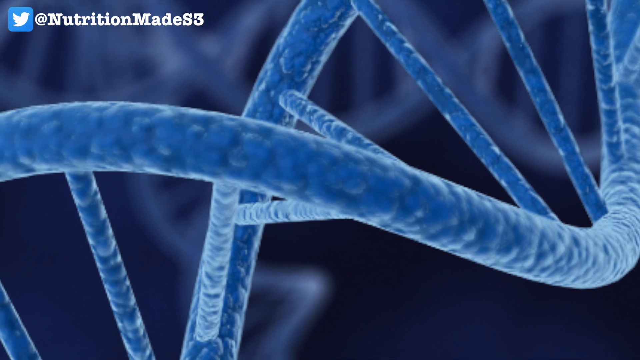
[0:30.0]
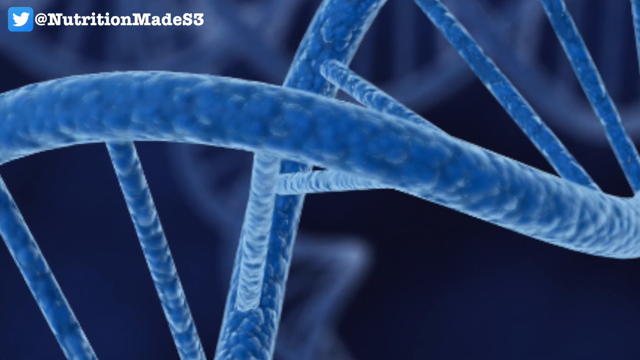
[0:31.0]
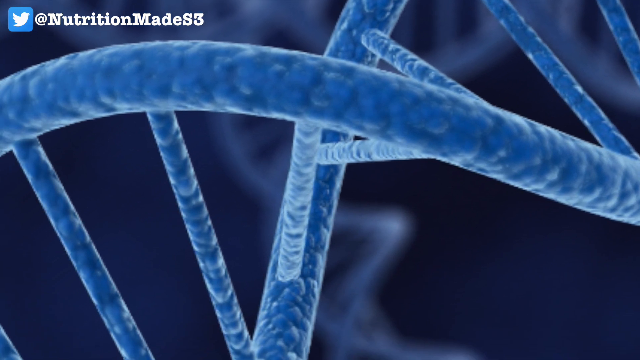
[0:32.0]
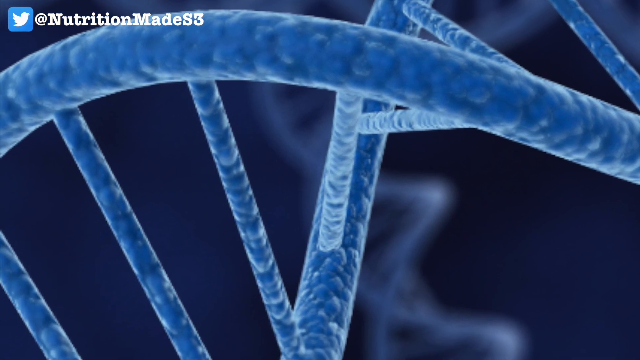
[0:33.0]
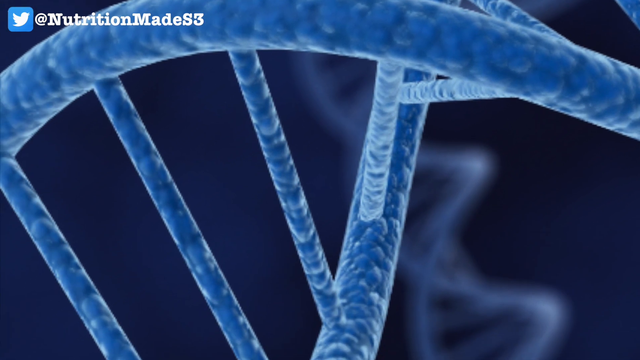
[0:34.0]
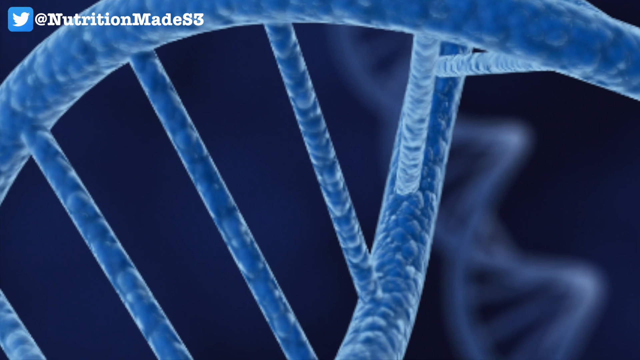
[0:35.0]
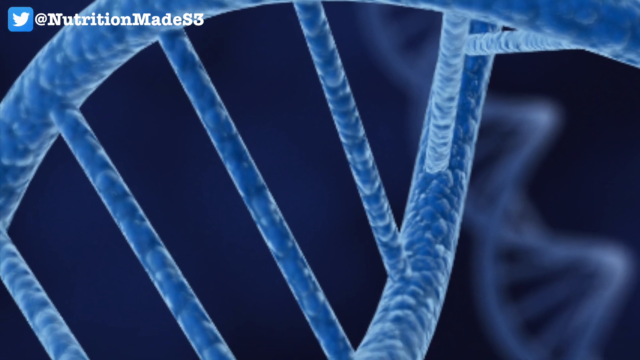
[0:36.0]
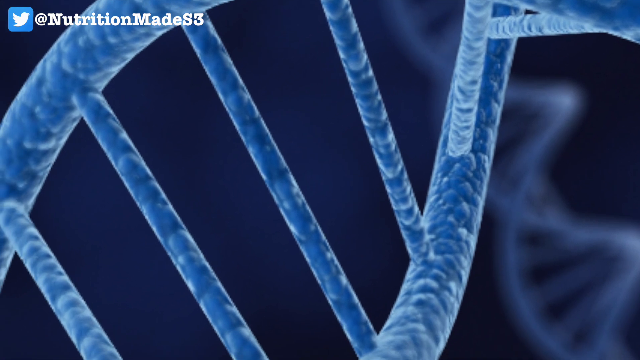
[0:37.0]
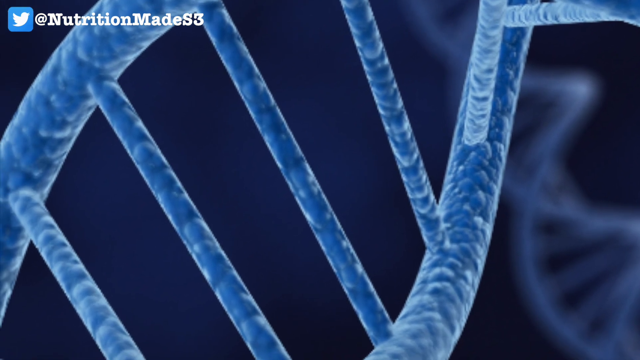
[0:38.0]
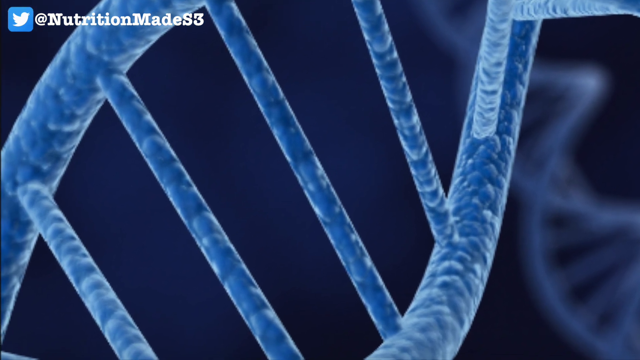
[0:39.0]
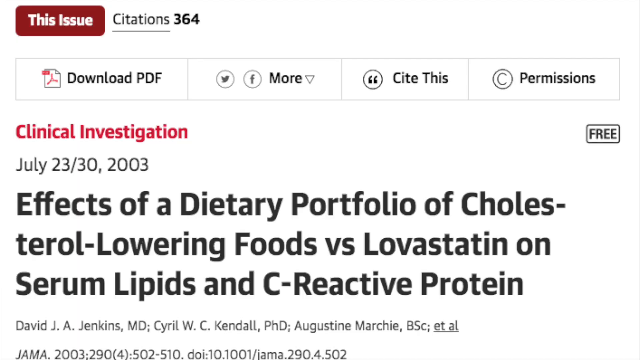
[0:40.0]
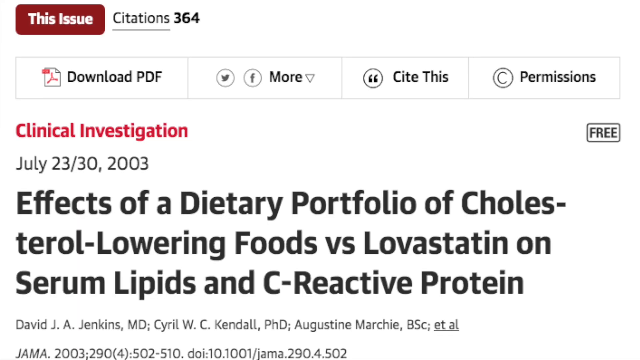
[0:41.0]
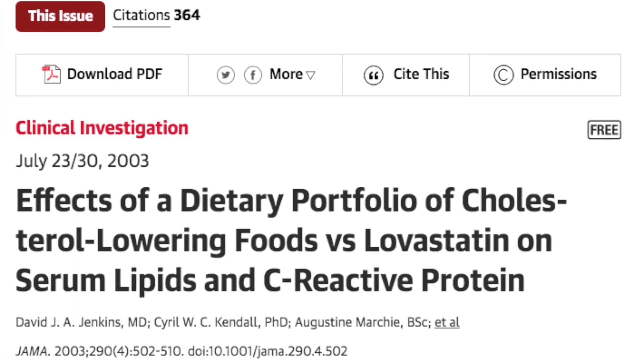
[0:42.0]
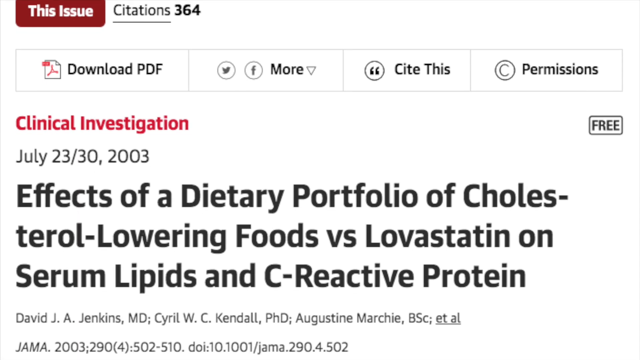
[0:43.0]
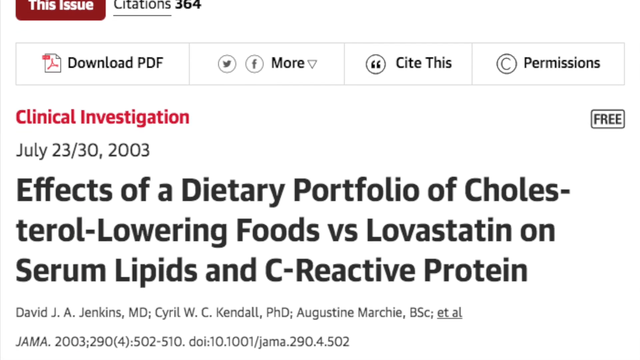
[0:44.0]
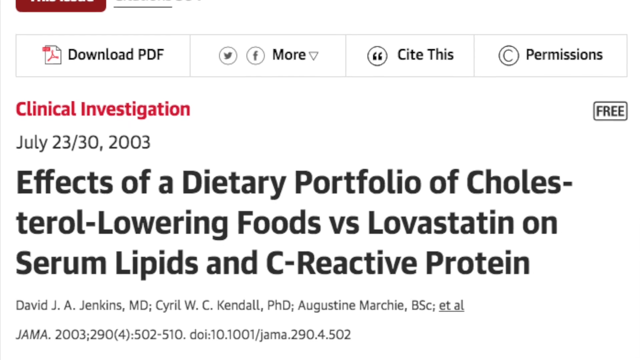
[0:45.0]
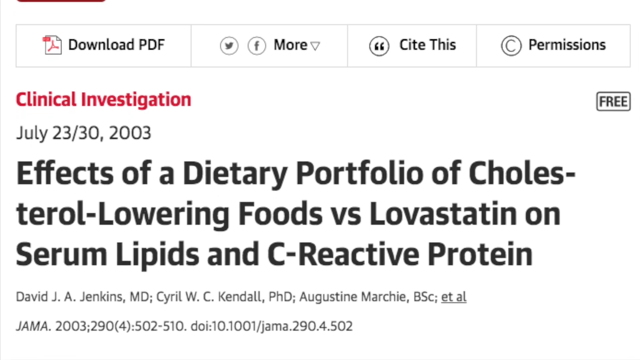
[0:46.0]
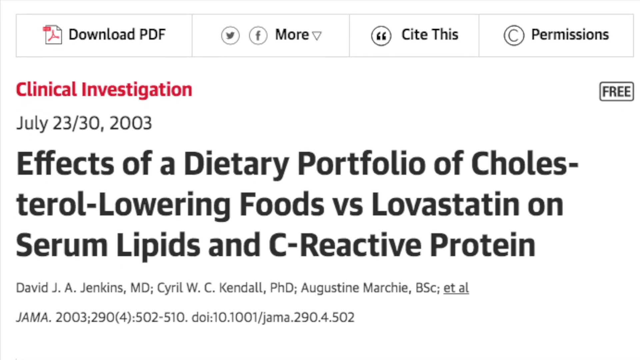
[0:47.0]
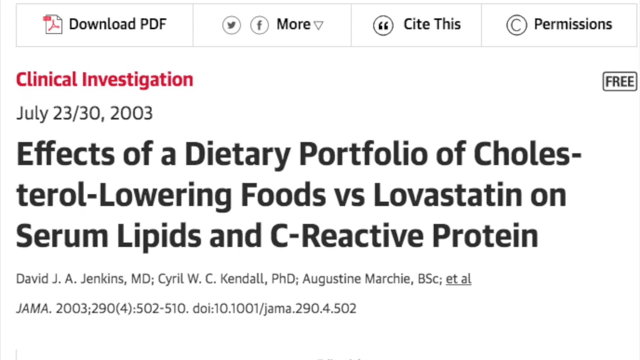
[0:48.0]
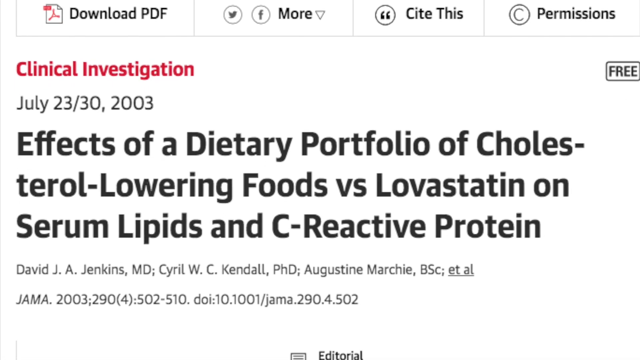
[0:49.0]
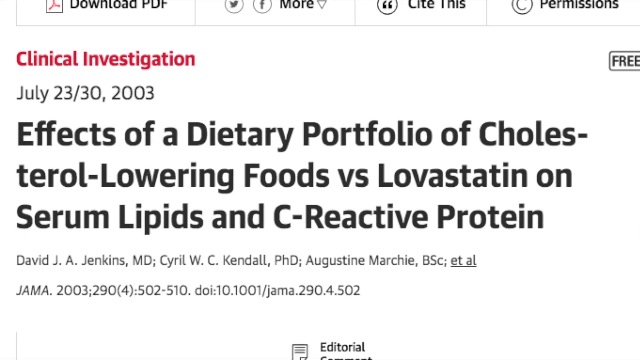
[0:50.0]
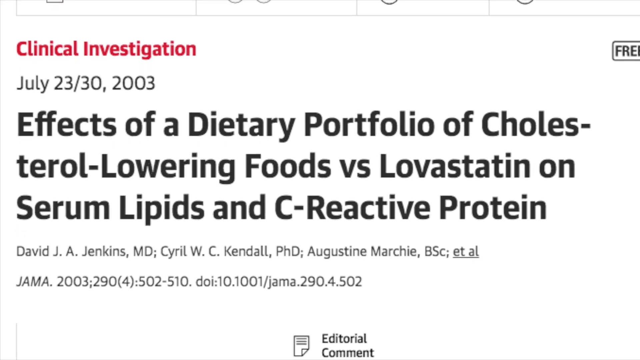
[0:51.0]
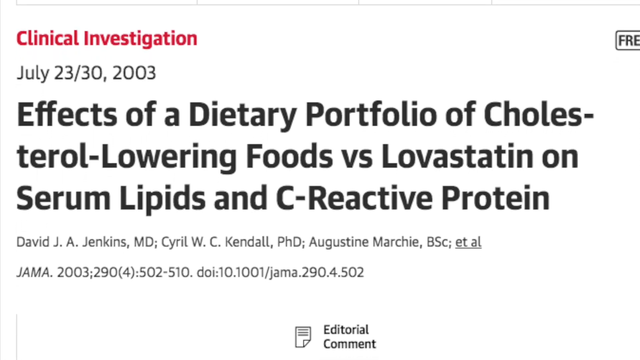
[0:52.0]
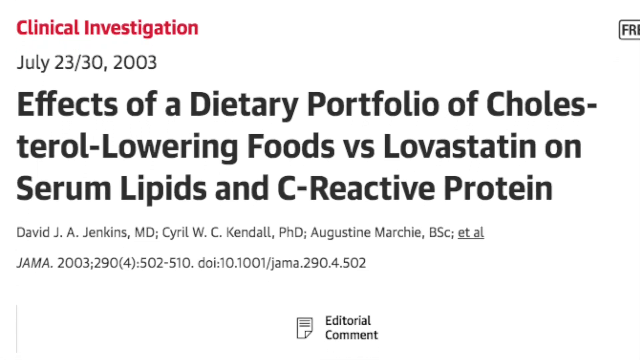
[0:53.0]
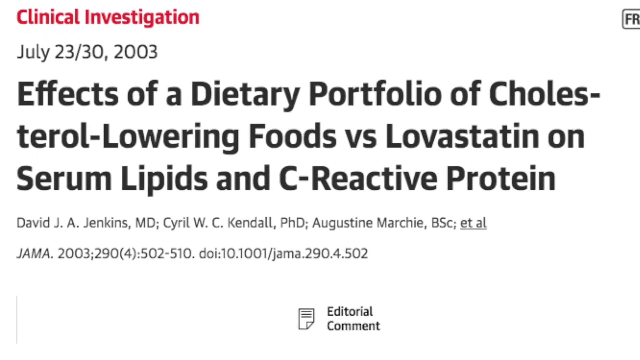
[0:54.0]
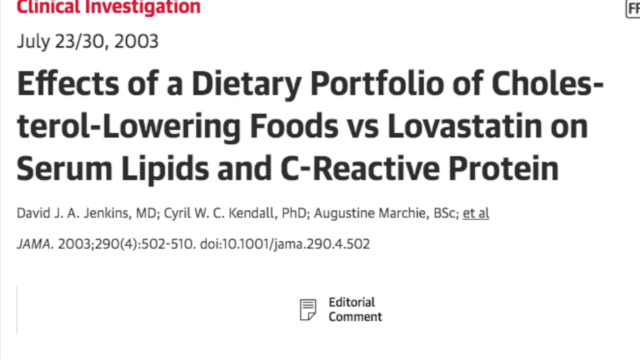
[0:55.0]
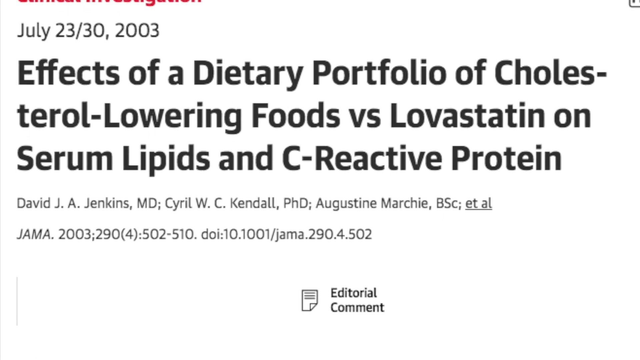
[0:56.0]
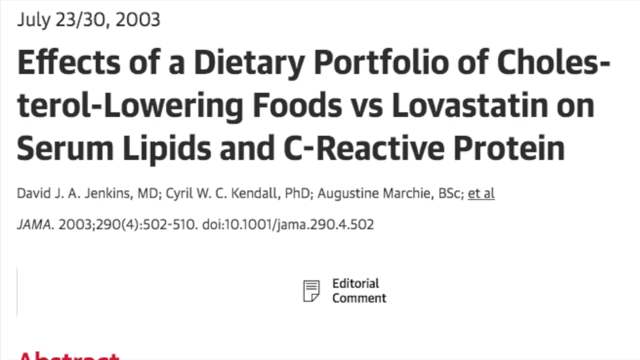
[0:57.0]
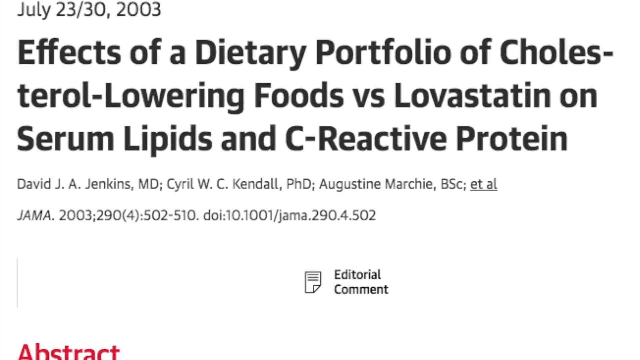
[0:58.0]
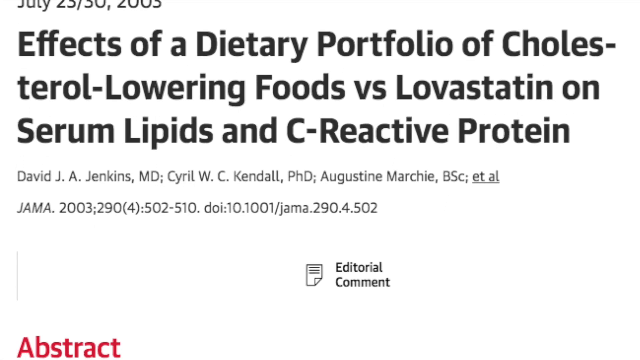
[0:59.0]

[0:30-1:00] A close-up, like something seen under a microscope, shows what looks like a rope starting in the center on the left side. It is in shades of blue and dark blue and somewhat veiny looking, turning toward the right and coming up toward the top right of the screen. Somewhat spindle-looking strands come off this main rope, leading to another cord of some sort. The background is dark black, and much of the area is highlighted, as if a neon light is shining on it. As the camera rolls to the left, more of these spindles appear, vertical. The page then turns into a white background with four buttons along the top, from left to right: "Download PDF," "More for Twitter, Facebook," "Cite This," and "Permissions." Below, red text reads "Clinical Investigation, July 23, 2003." The title of the PDF is "Effects of a Dietary Portfolio of Cholesterol-Lowering Foods vs. Lovastatin on Serum Lipids and C-Reactive Protein." Below that, smaller text shows names, perhaps of the scientists or doctors involved in the study: "David J.A. Jenkins, M.D. Cyril Kendall, Ph.D. and Augustine Marchi."